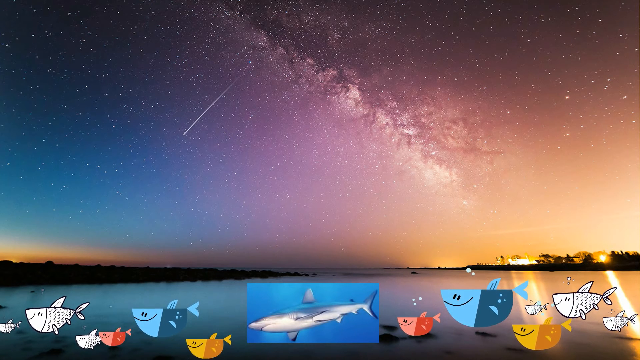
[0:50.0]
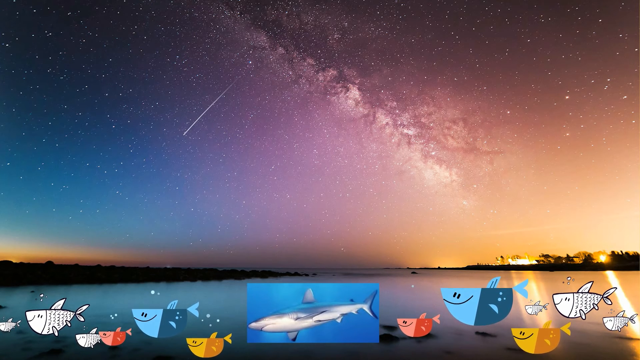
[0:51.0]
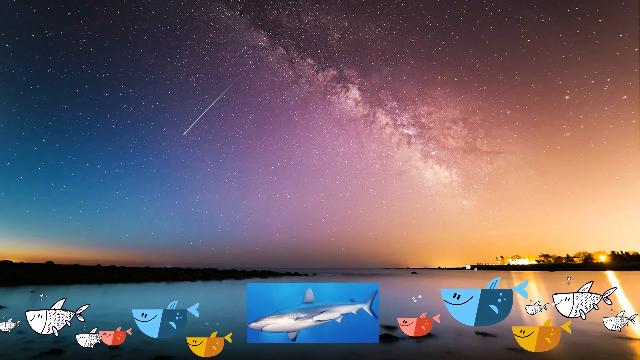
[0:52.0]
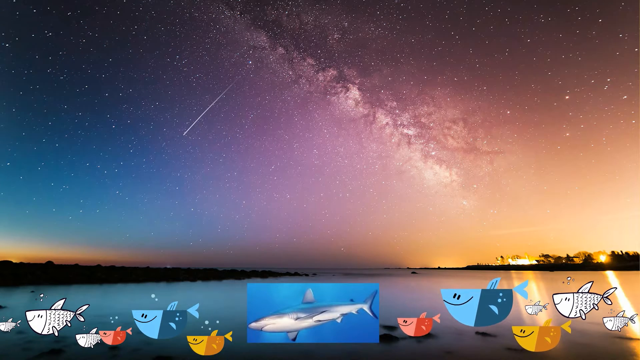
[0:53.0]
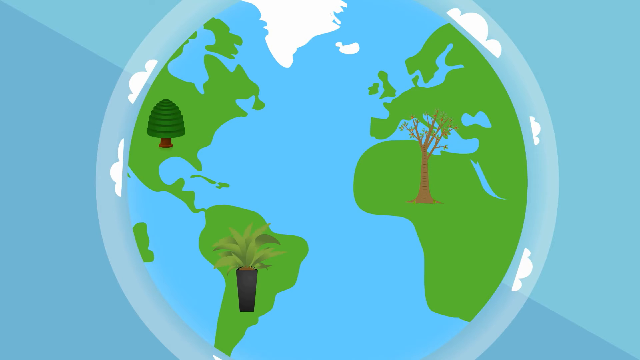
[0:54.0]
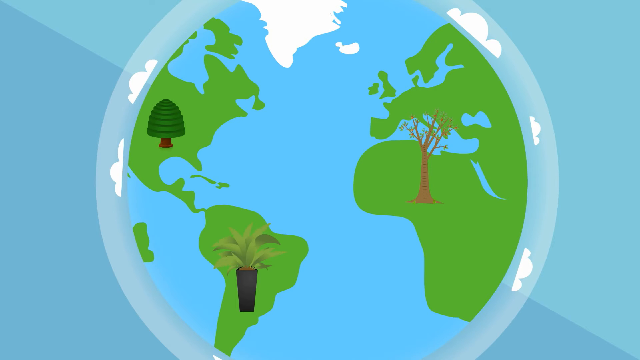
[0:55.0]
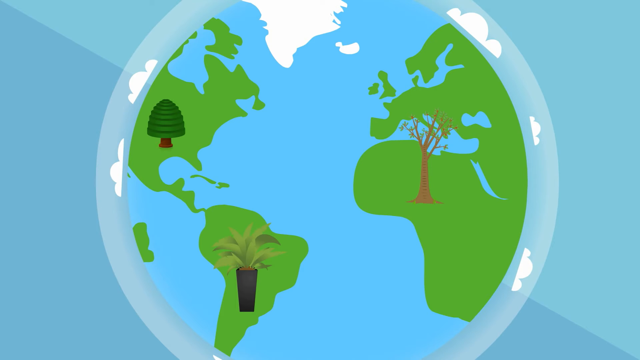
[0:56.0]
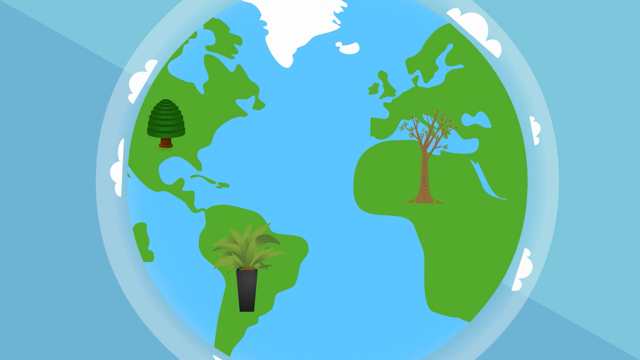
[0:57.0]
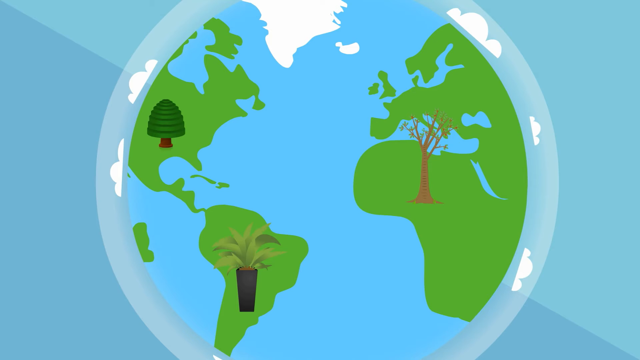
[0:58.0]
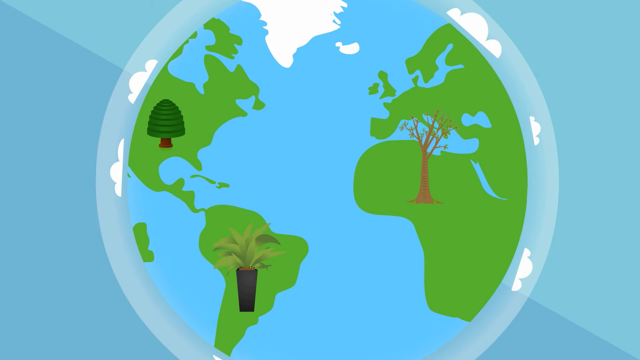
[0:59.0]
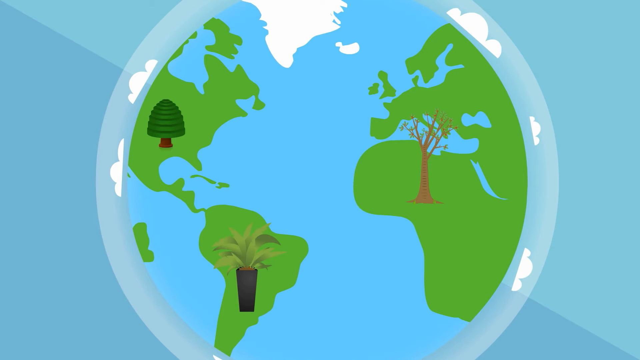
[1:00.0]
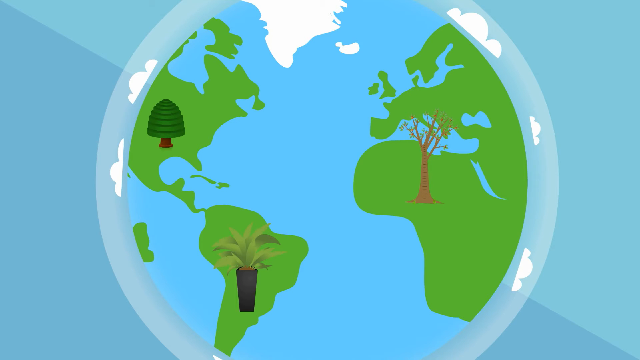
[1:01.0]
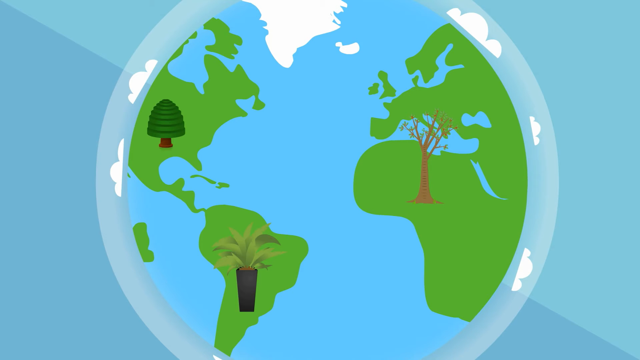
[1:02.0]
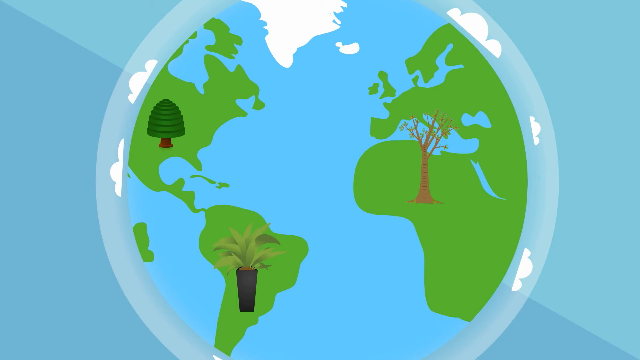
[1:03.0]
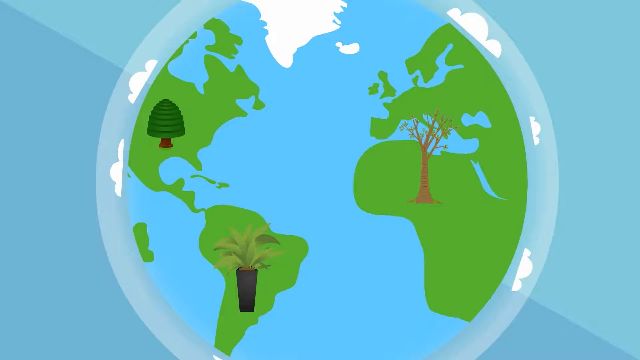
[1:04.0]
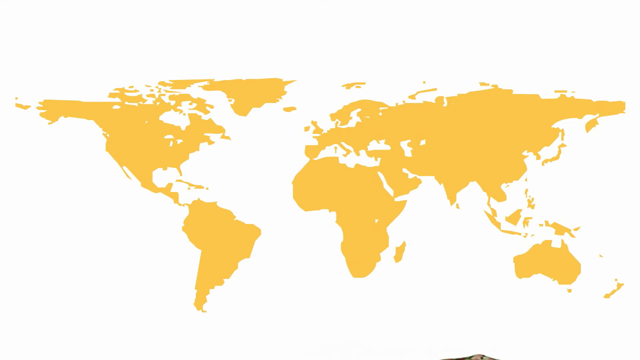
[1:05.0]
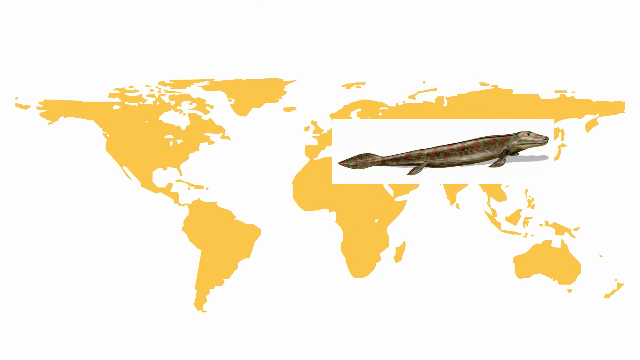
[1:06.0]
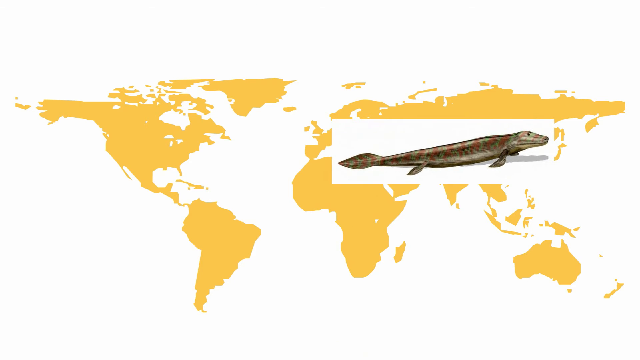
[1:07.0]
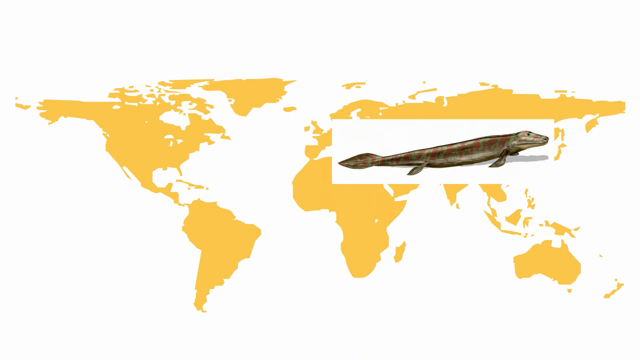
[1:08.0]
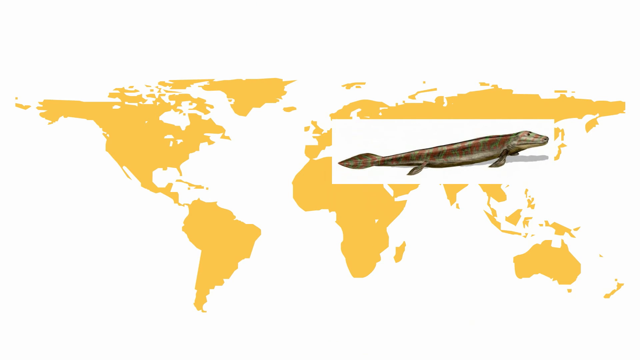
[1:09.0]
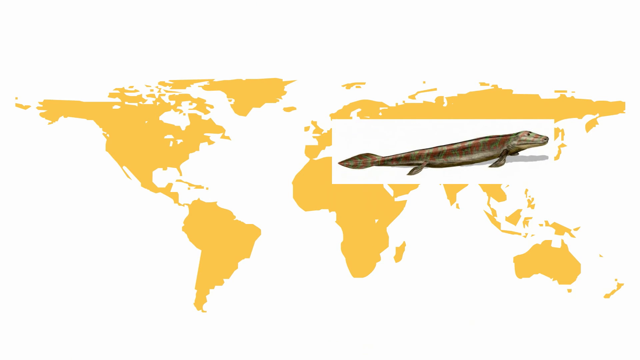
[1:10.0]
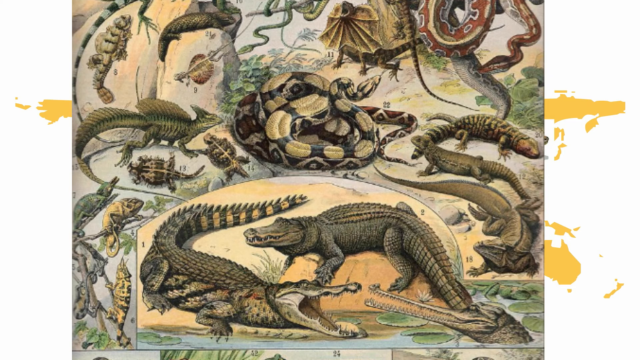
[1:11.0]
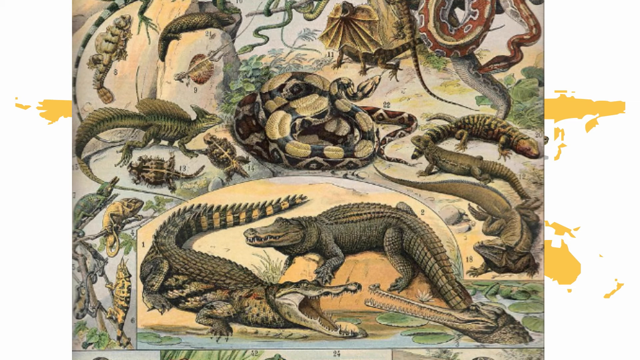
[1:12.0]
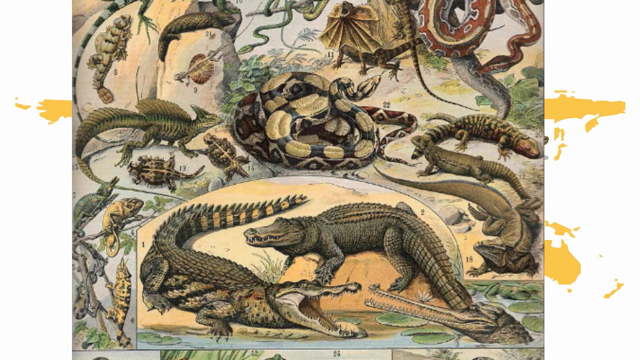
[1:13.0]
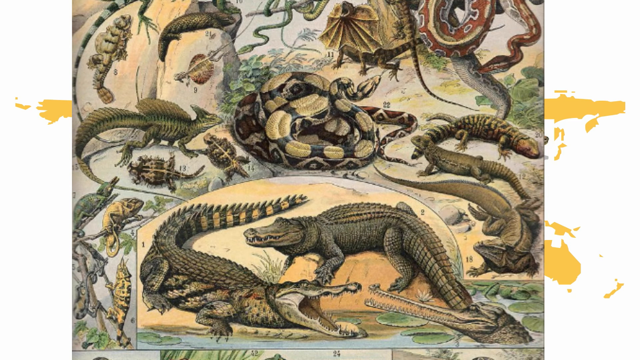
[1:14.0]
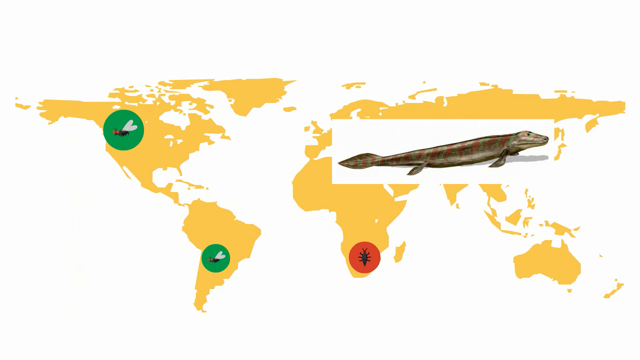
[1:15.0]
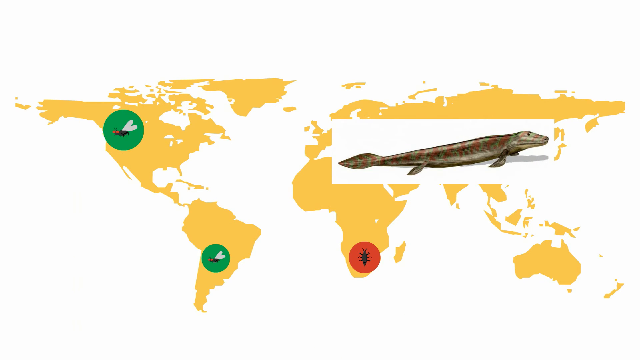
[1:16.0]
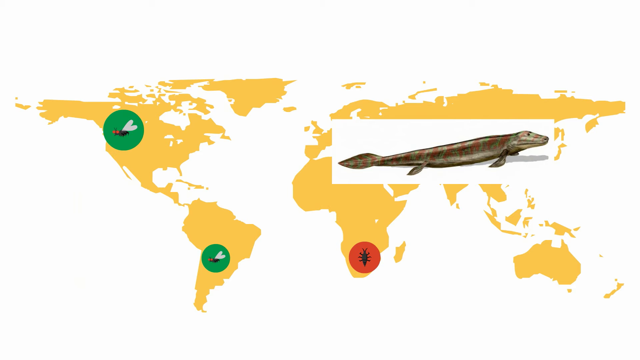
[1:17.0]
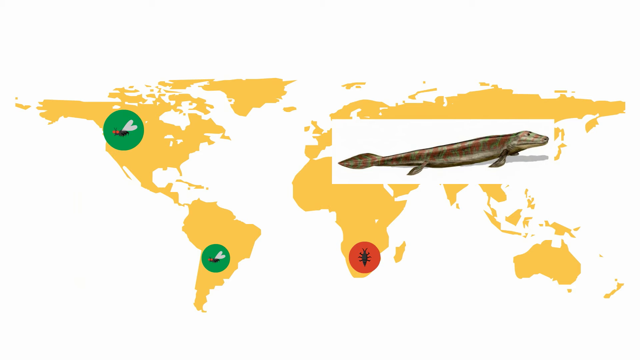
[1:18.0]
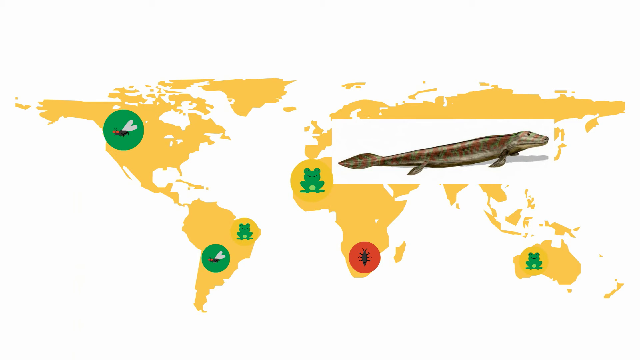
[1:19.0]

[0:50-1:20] A picture shows a sunset with a sky that is blue in some parts, purple in others and yellow in others, with about four different fish beneath. Next is a big balloon-like creature with different types of plants and trees inside it, including what looks like a Christmas tree. The picture looks like a moon and has a tree, a potted plant and what looks like a Christmas plant inside it; the background is blue with a sprinkle of white, and the plants are green. A still picture of what looks like a map appears, followed by a tailed fish. There are pictures of different reptiles, including a crocodile, a chameleon, a salamander, different kinds of lizards, and snakes, including very large snakes like a python. A frog, some flies and a light blue and navy blue fish also appear.